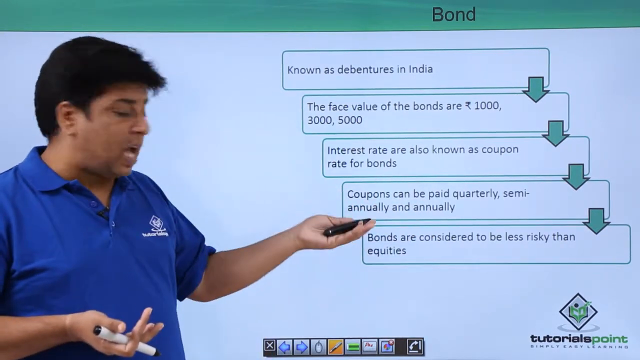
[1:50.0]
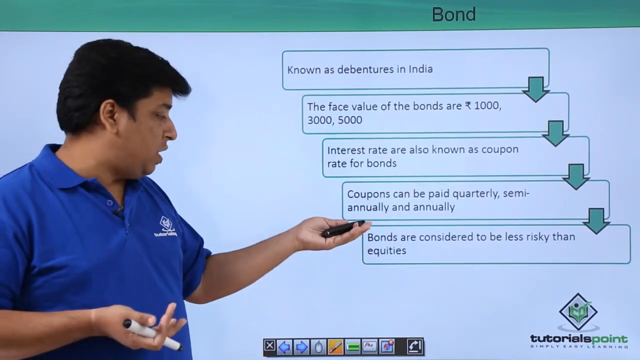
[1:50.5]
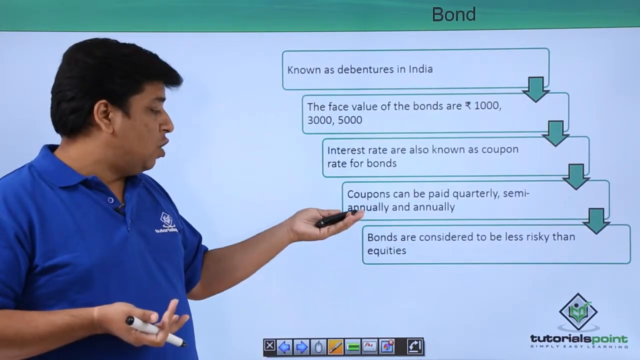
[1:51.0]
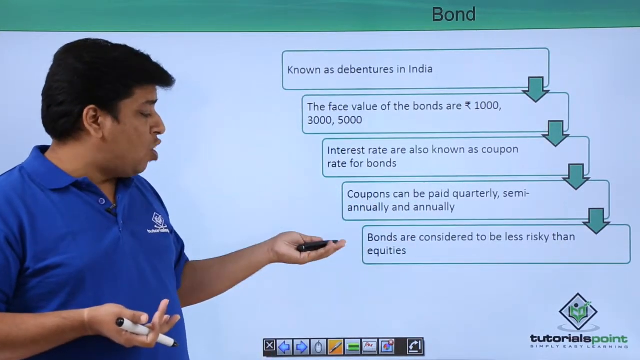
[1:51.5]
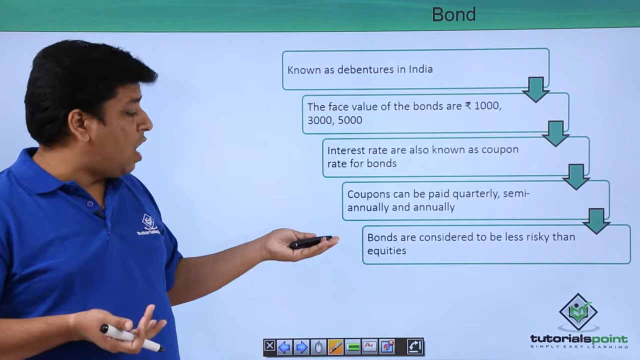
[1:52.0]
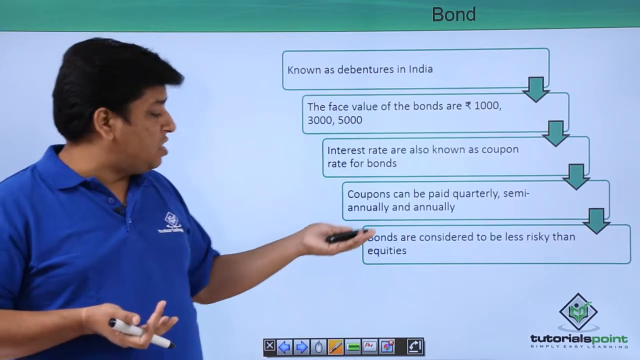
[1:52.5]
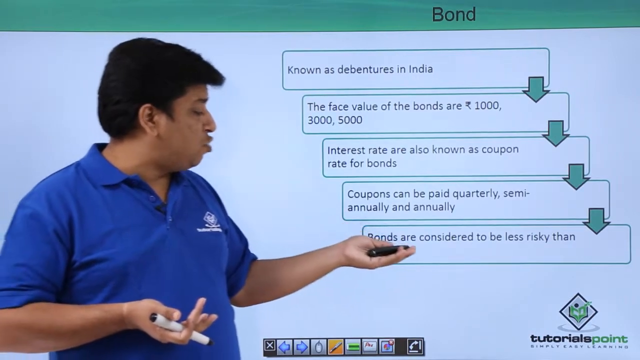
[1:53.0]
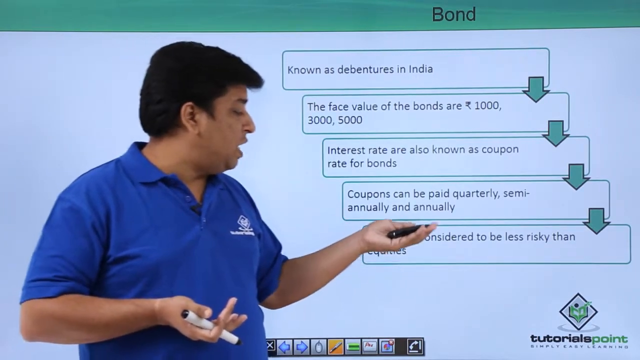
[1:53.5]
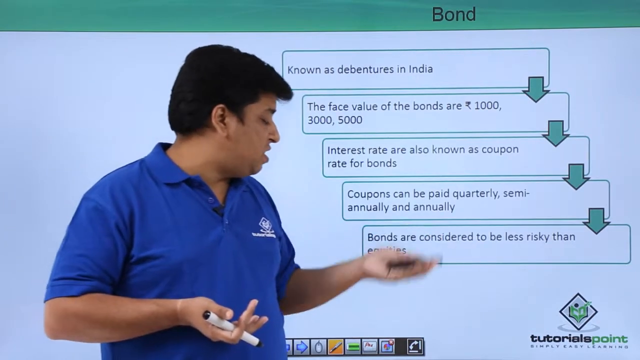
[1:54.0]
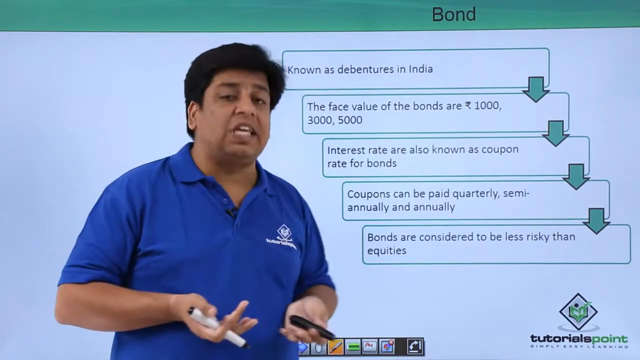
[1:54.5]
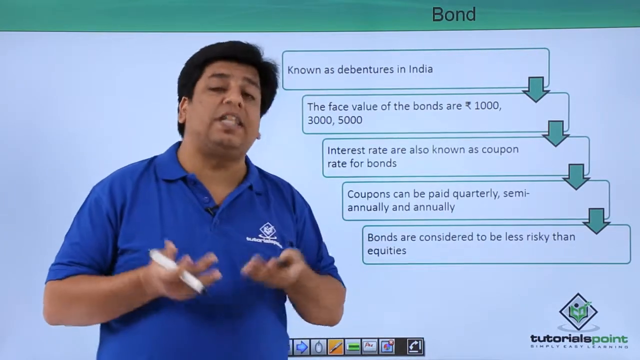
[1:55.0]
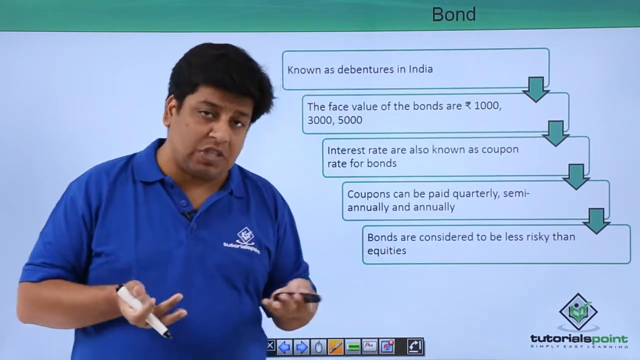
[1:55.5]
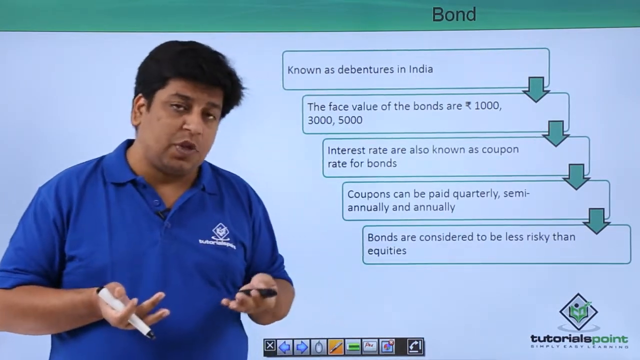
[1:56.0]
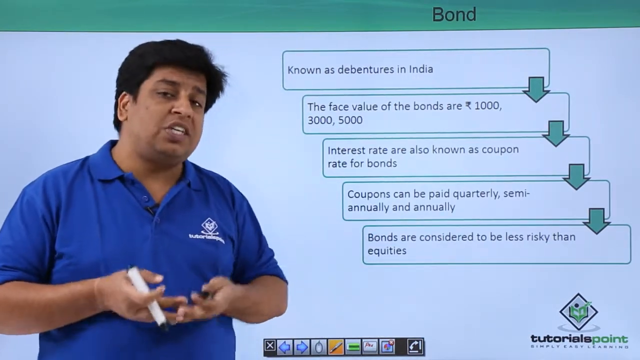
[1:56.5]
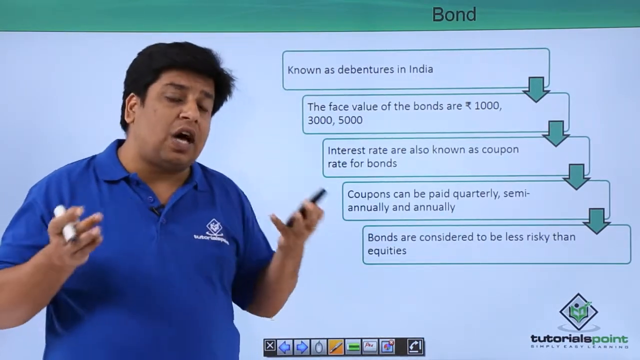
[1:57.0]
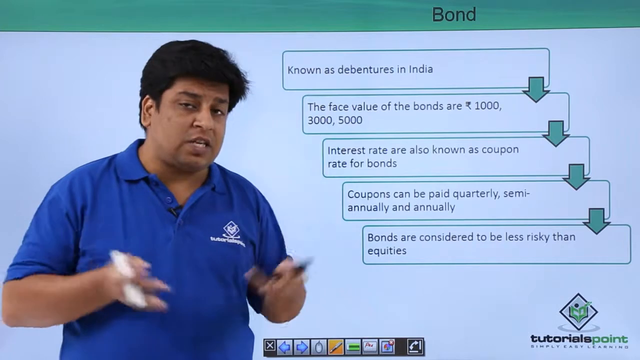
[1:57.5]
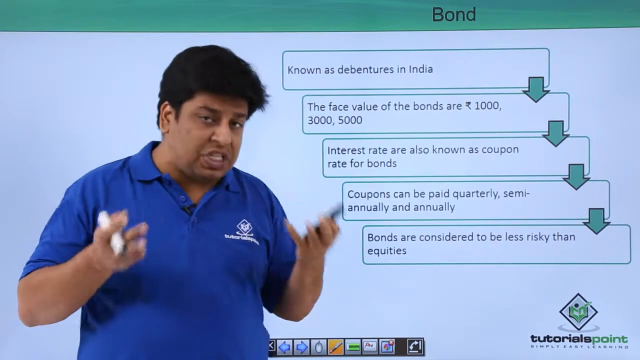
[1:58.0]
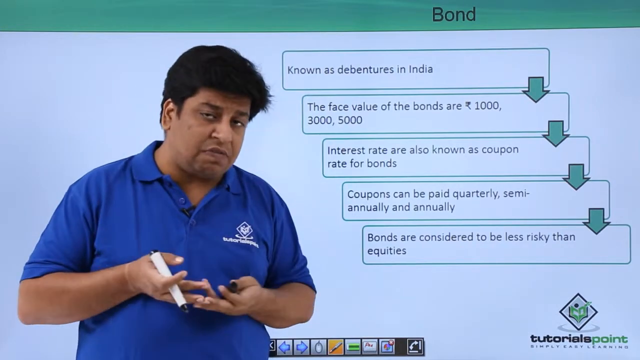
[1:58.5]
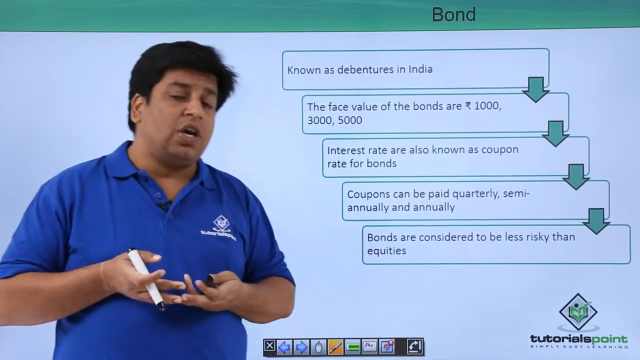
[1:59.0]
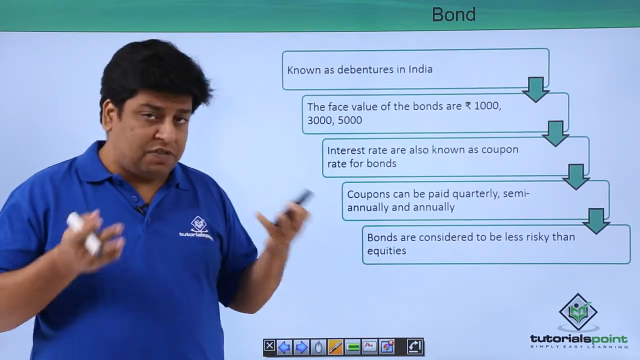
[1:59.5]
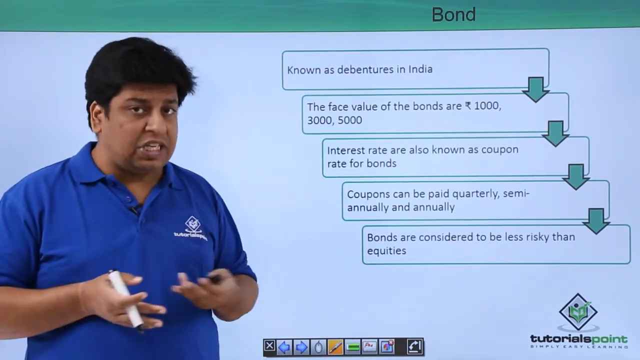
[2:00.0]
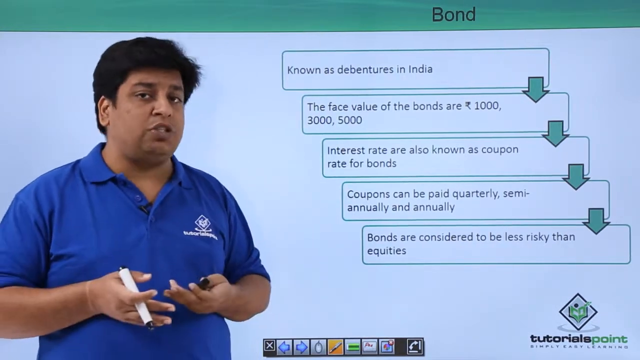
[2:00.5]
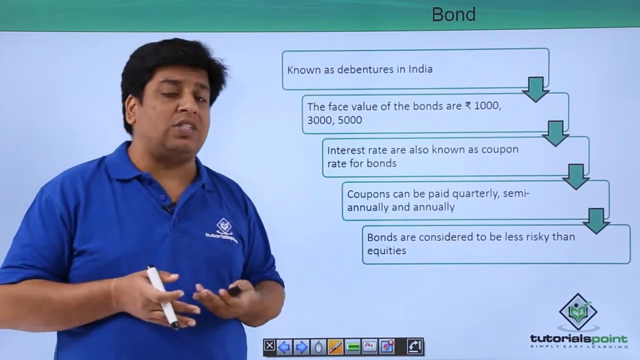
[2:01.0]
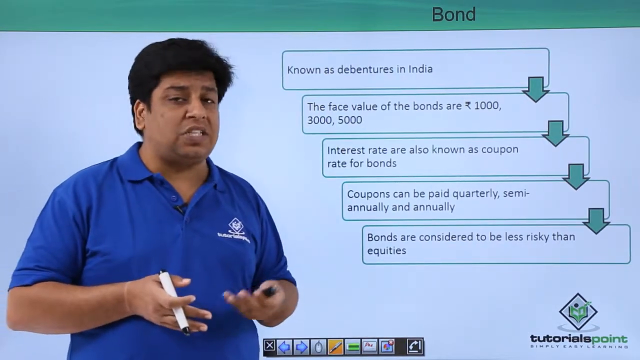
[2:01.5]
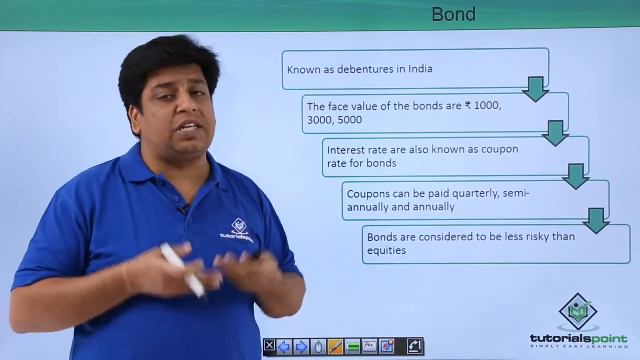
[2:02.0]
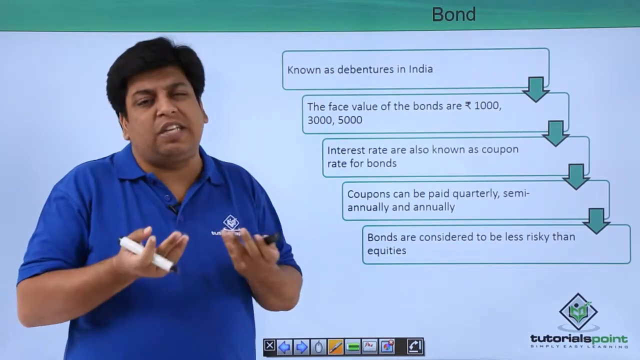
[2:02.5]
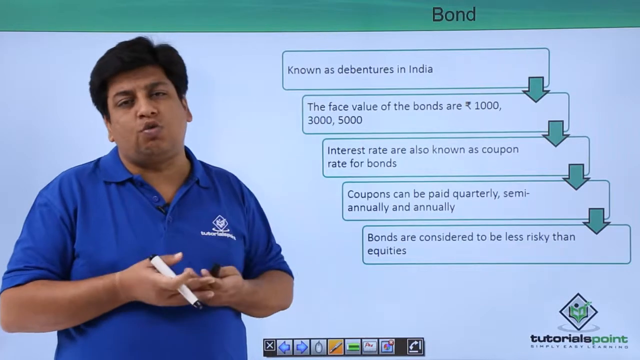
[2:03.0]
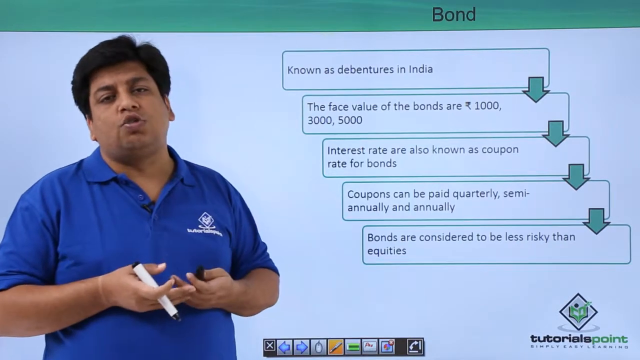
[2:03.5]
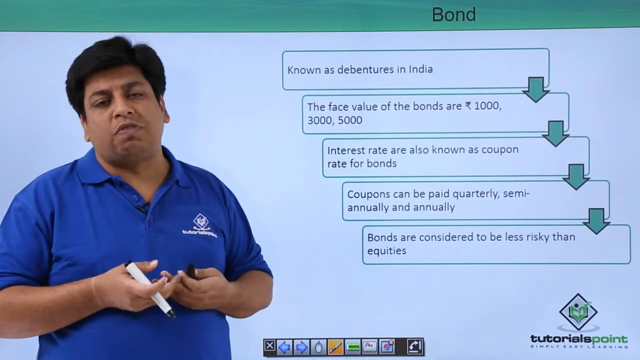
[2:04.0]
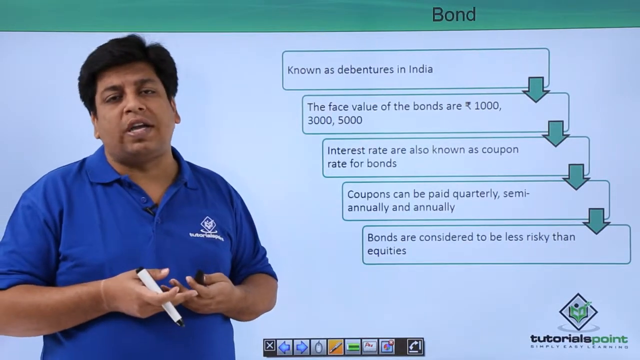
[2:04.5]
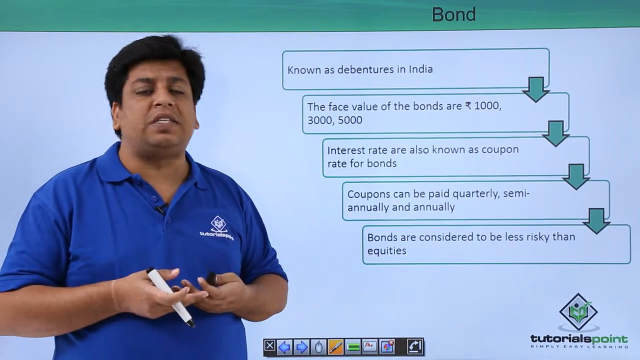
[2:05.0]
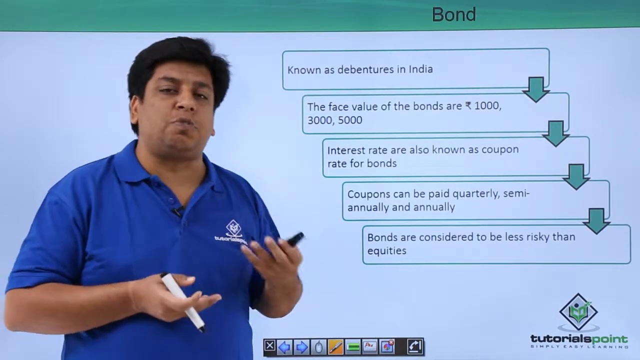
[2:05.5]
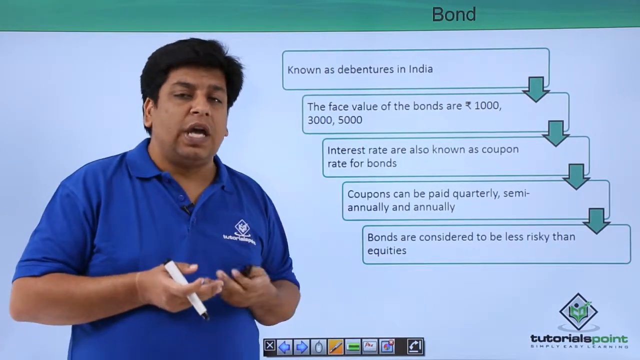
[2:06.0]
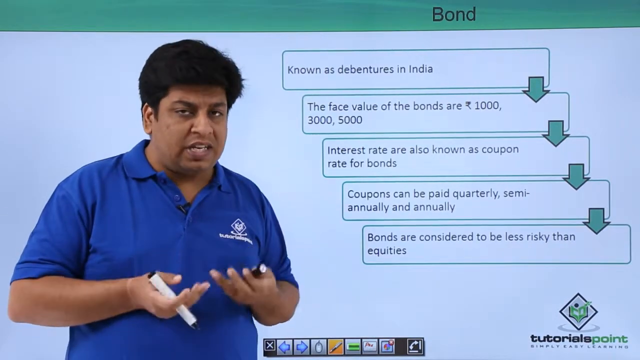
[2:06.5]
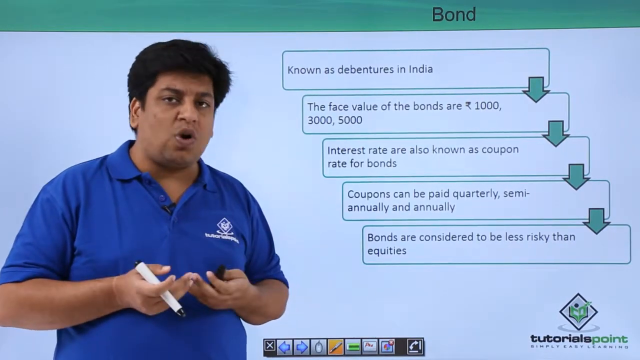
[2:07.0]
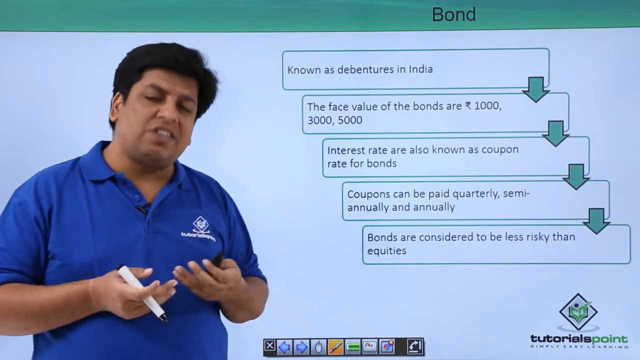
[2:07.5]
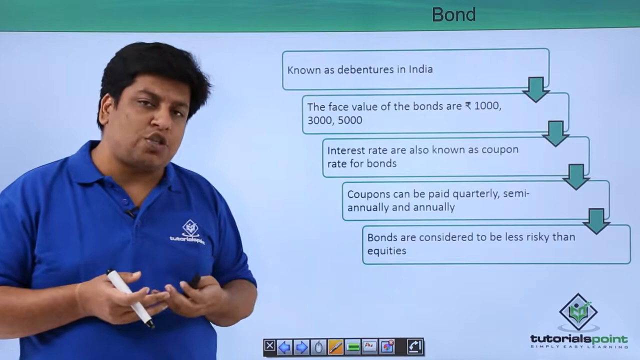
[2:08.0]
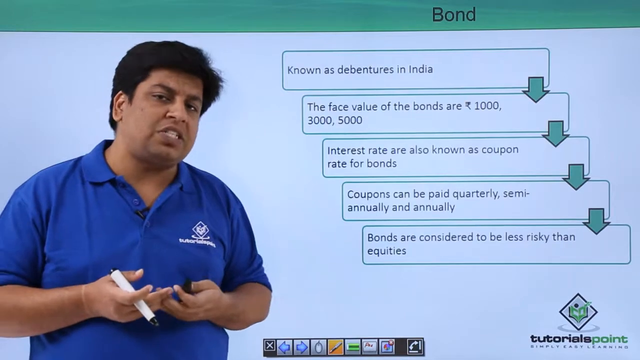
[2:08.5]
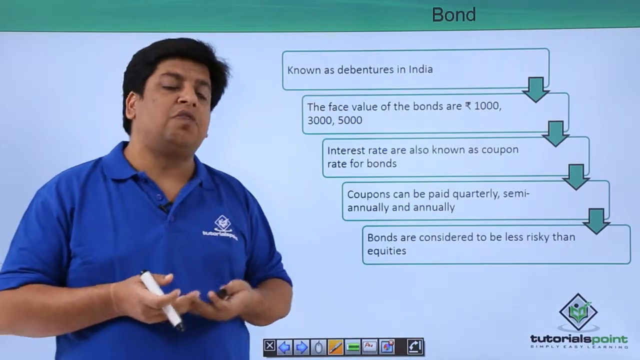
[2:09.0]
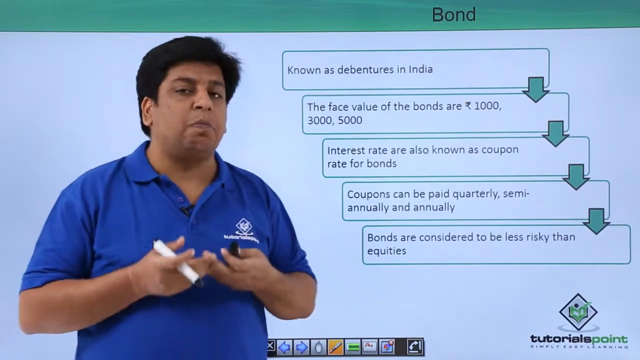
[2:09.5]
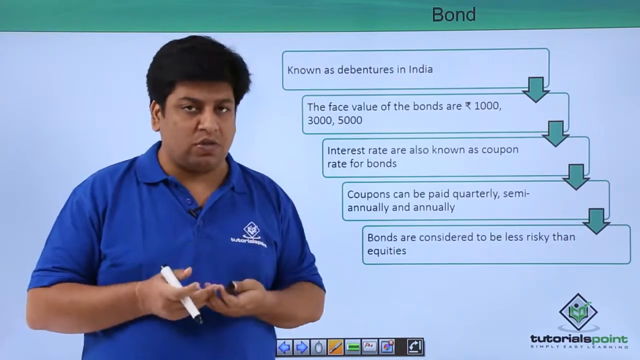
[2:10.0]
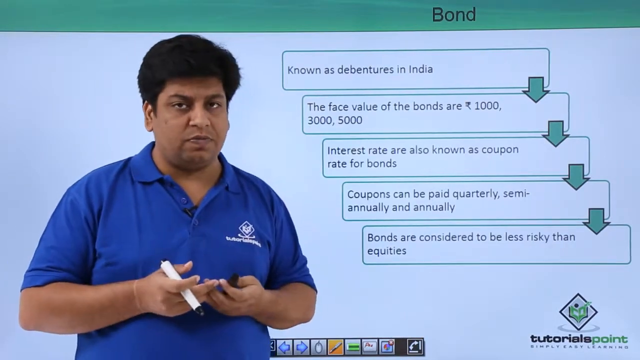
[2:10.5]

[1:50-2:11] The Indian man on the left-hand side of the screen wears a blue polo shirt with a Tutorials Point logo on his left breast. He has long, poofy black hair and holds a marker in his right hand and a laser pointer or slide changer in his left hand. He looks over information about bonds set out in descending rectangles, with arrows pointing down to the next rectangle. The first says "known as debentures in India", the second "the face value of the bonds are one thousand rupees three thousand five thousand", the third "interest rates are also known as coupon rate for bonds", the fourth "coupons can be paid annually, semi-annually or quarterly" and the fifth "bonds are considered to be less risky than investments". He continues talking about bonds, gesturing a lot with his hands.